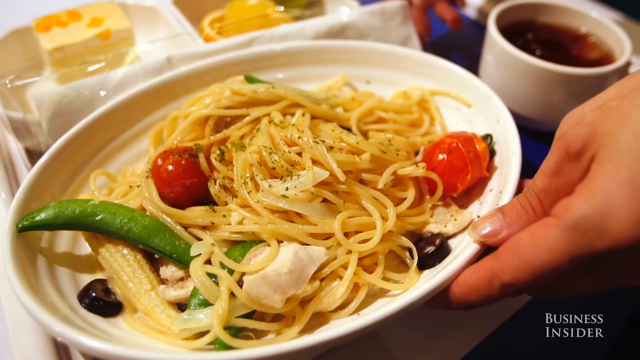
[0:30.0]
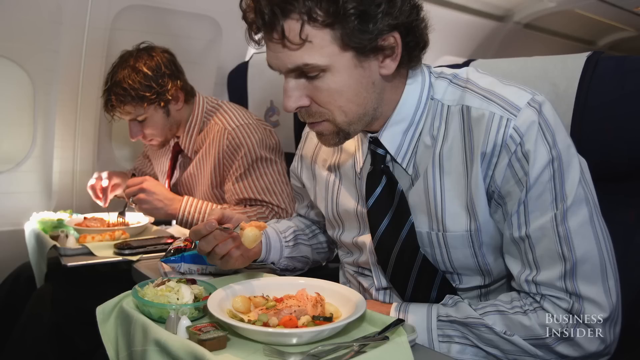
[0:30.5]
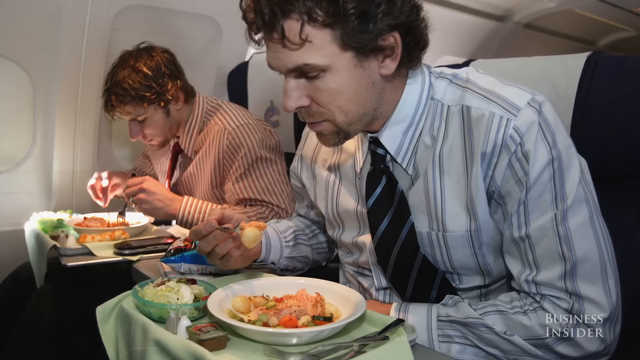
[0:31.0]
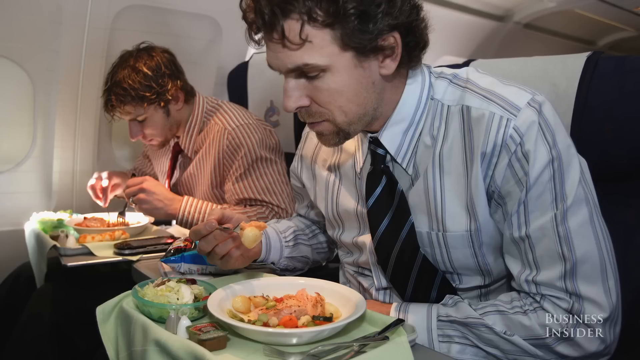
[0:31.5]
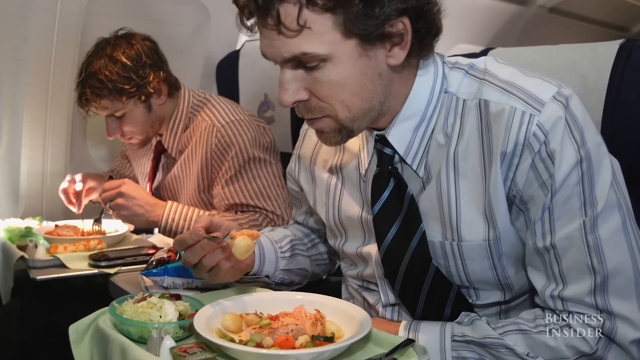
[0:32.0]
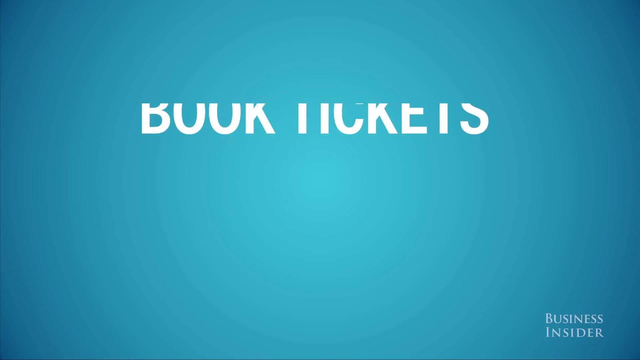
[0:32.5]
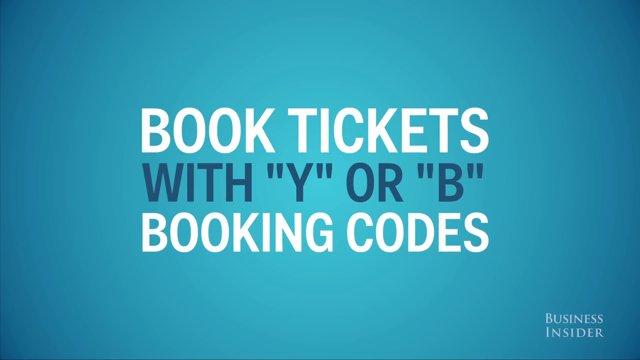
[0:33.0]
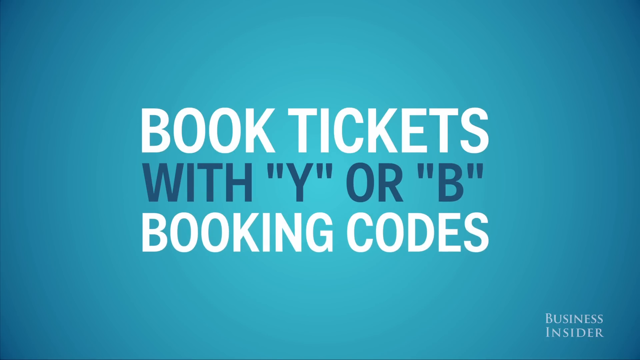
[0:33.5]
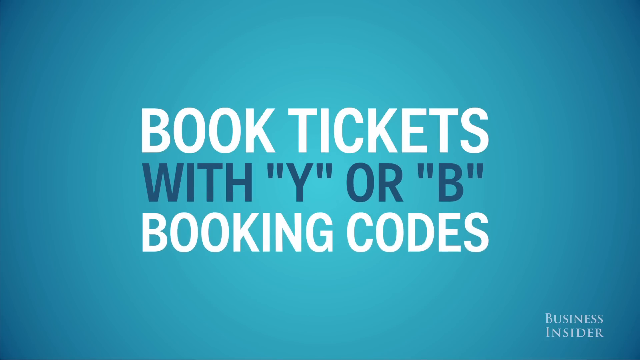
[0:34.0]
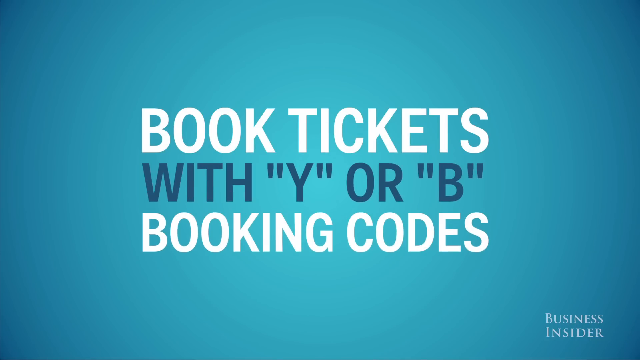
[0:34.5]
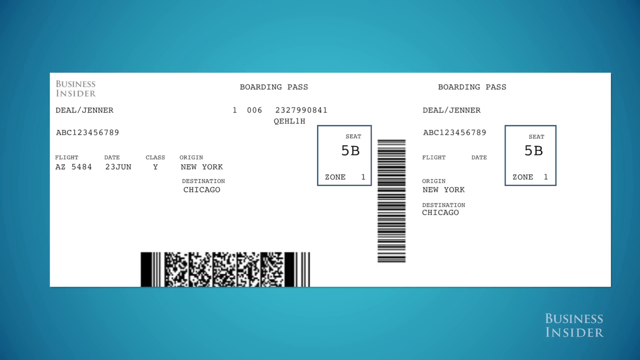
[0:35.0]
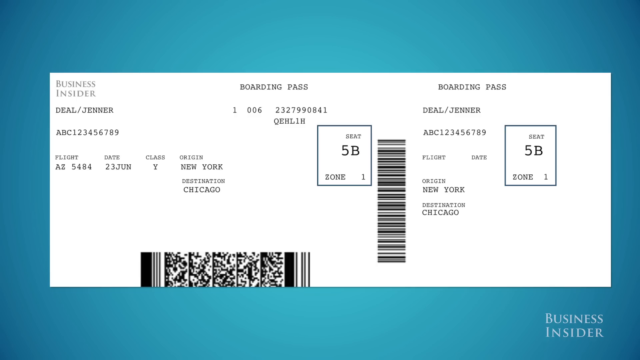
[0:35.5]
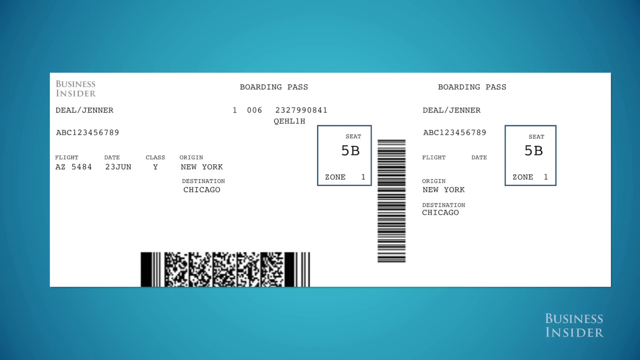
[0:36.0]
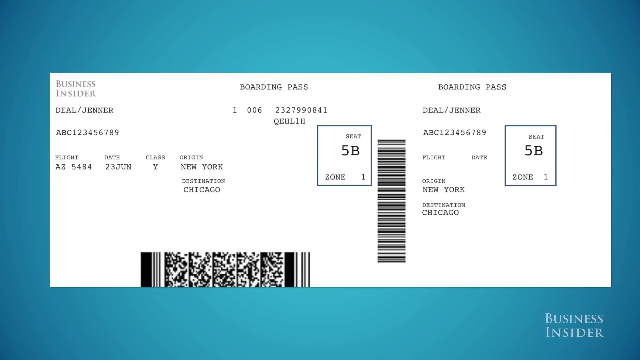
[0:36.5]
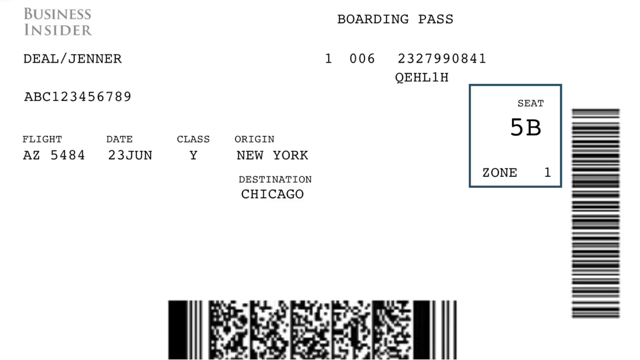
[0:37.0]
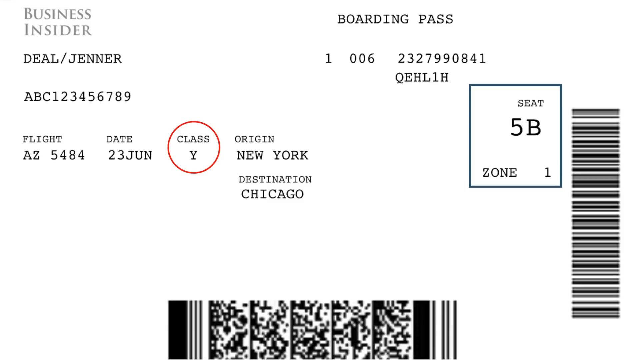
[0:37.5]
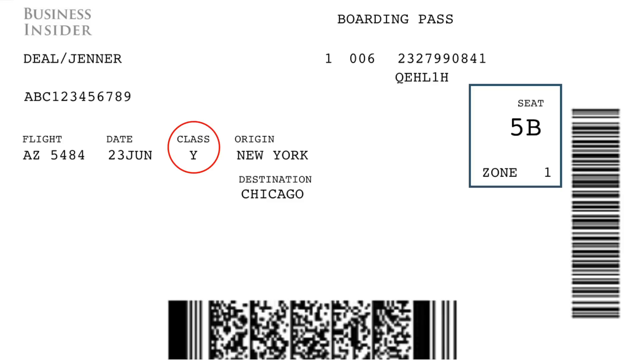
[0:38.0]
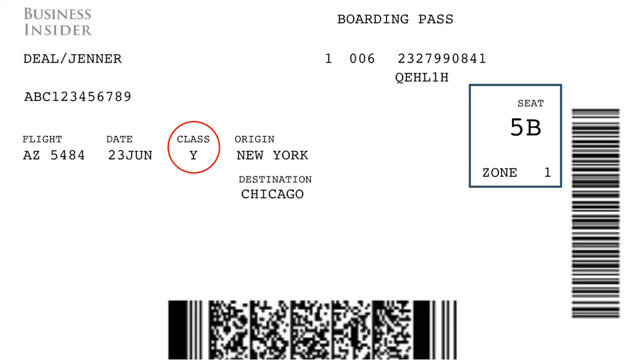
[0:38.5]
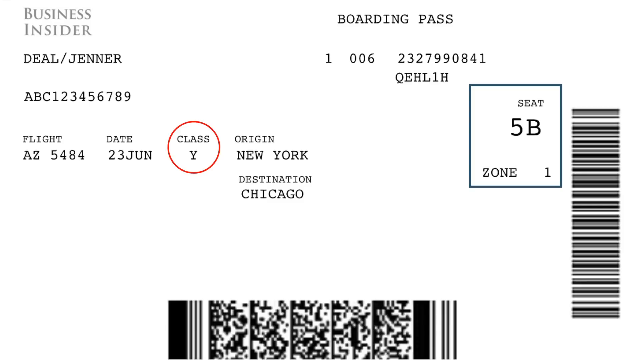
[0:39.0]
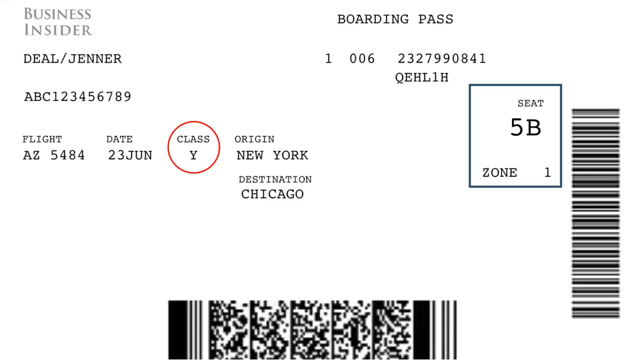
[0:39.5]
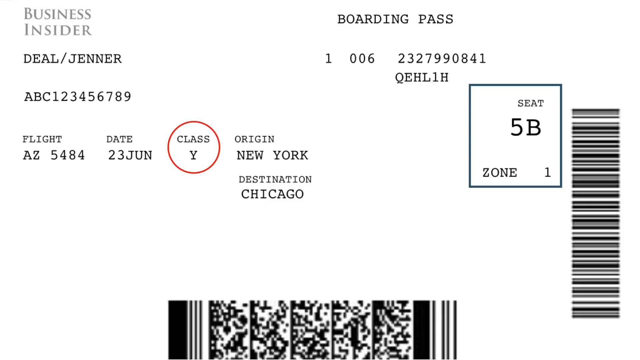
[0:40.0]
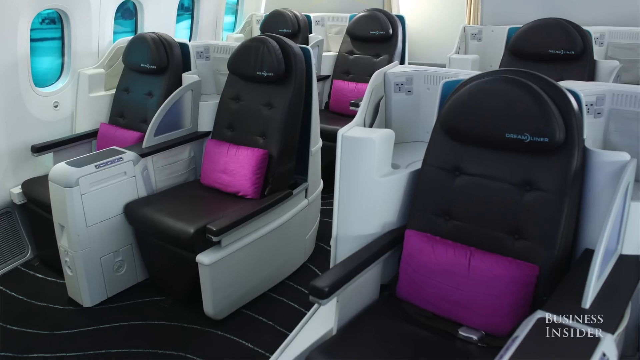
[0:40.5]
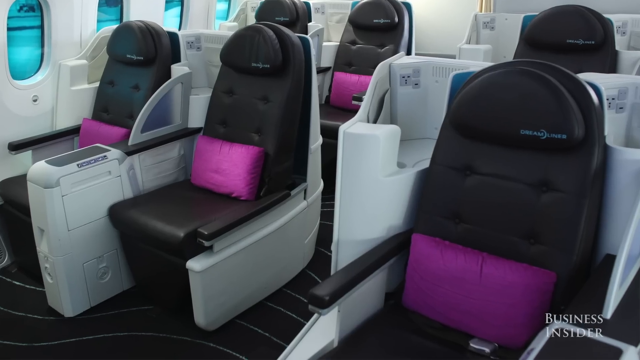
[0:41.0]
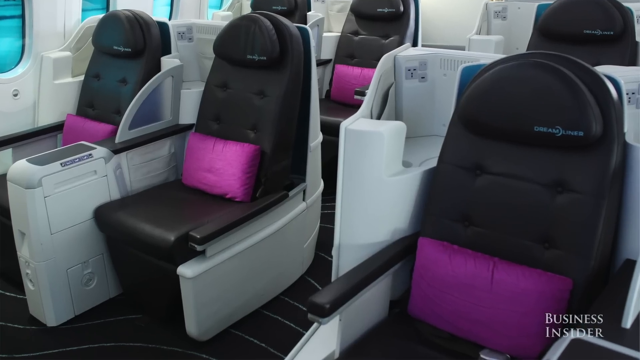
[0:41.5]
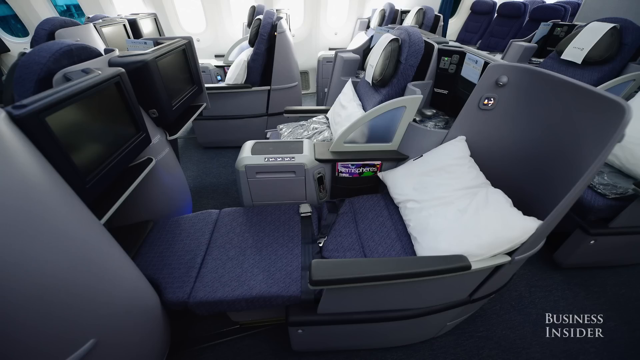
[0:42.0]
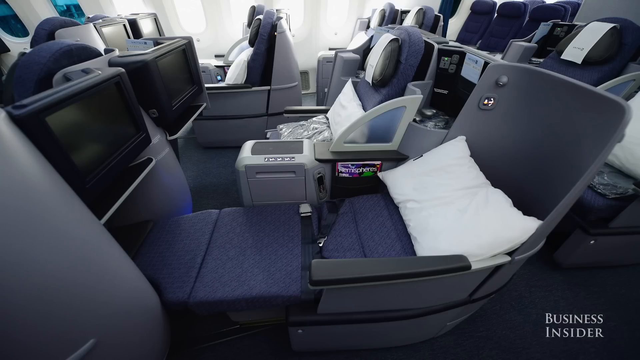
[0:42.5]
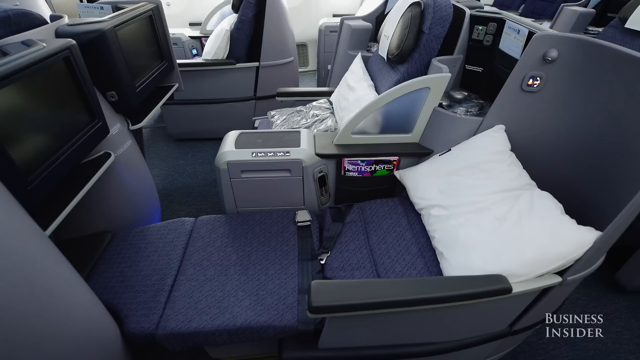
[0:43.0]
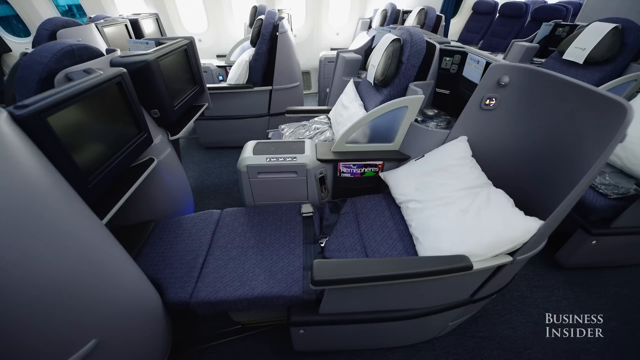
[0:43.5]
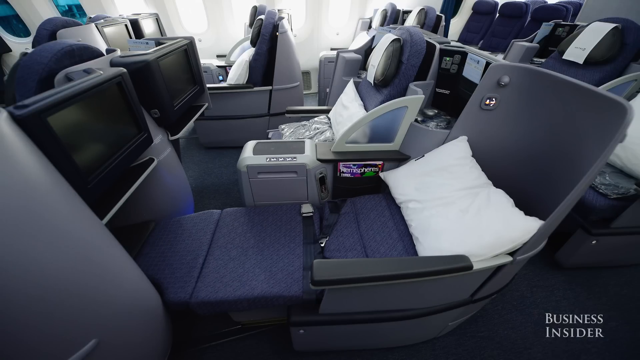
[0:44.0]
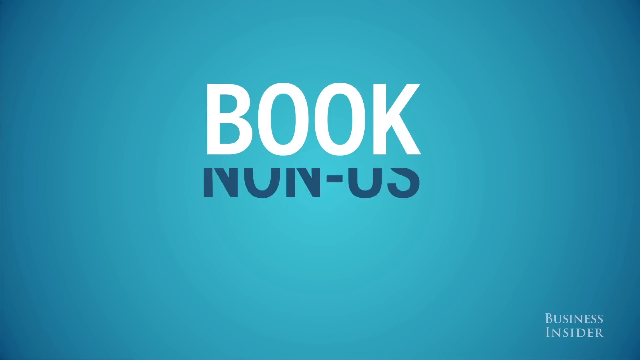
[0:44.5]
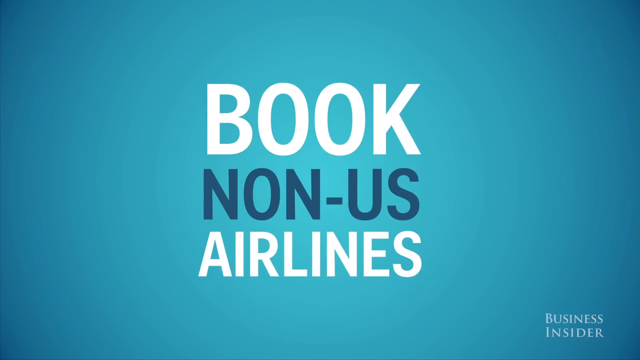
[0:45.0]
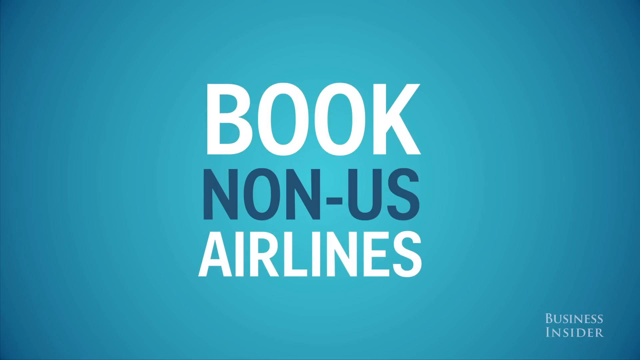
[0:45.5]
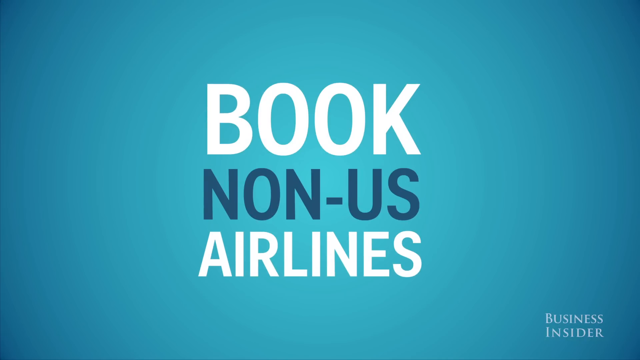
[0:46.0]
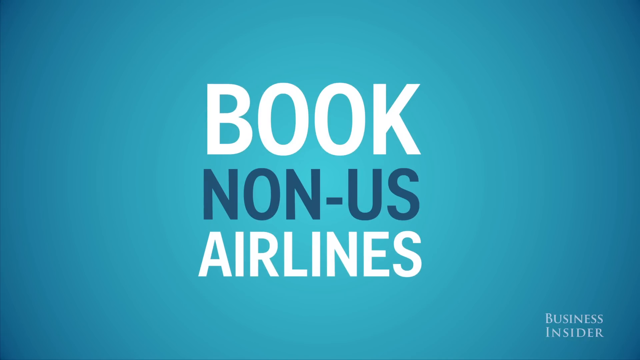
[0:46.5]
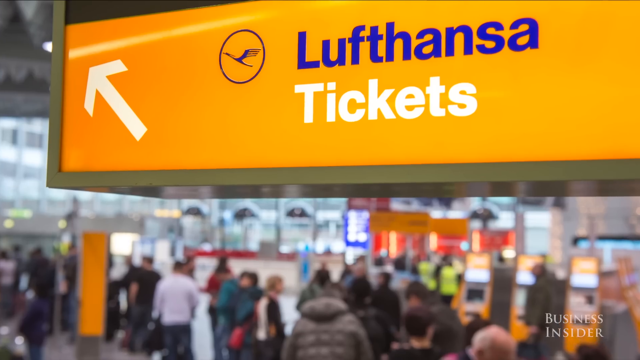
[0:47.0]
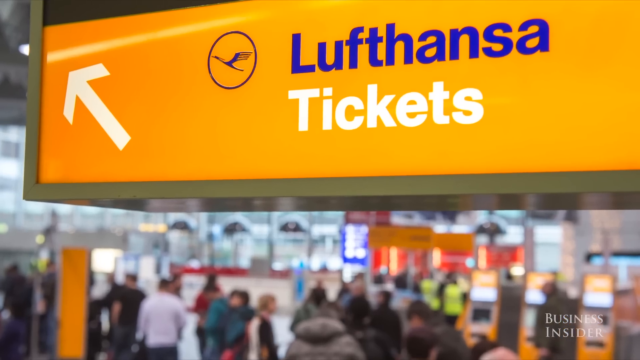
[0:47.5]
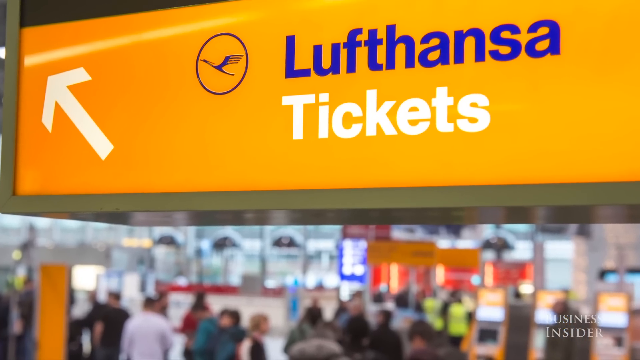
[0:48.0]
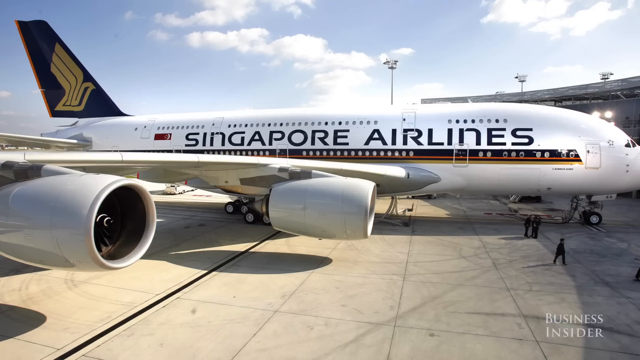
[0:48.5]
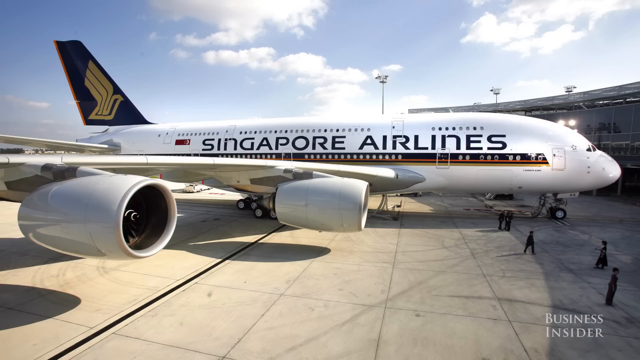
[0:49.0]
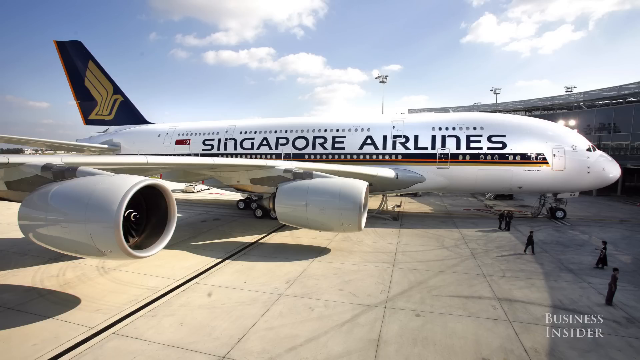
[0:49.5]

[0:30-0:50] Two men eat food on an airplane, holding forks and leaning over. Text reads "book tickets with Y or B booking codes." A picture of an airline ticket shows a circled class Y. Pictures show six empty airline seats and airline seats opened up to bid. Text reads "book non-US airlines," and Lufthansa tickets appear, along with "Jenner deal." A Singapore Airlines airplane and a New Zealand Airlines airplane appear. A passenger seat is made to look like a bed, with a white pillow on it. A boarding pass shows "5B" and the letters Q, E, H, L, I, H. Black seats have red pillows. Lufthansa tickets appear on a yellow sign, and Lufthansa tickets appear with the Singapore Airlines logo. A plane flies in the air over the clouds. A ticket shows origin New York, destination Chicago, flight "AZ5484," seat 5B, zone 1, 23 June. A man wears a white striped shirt and a tie.